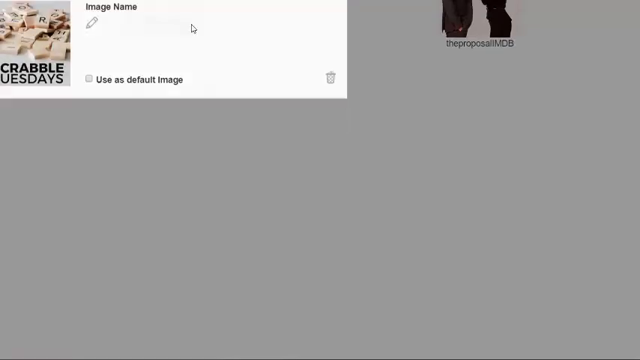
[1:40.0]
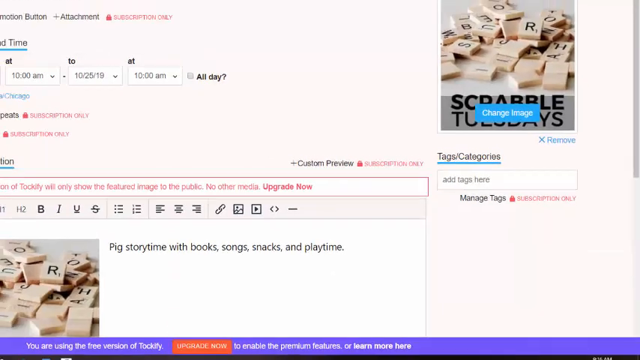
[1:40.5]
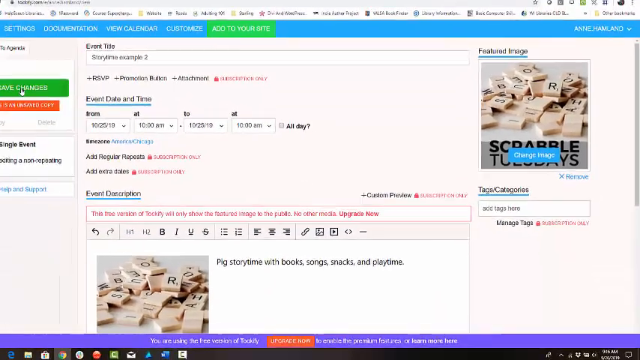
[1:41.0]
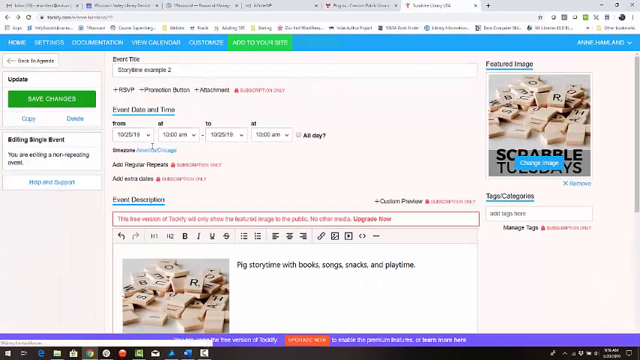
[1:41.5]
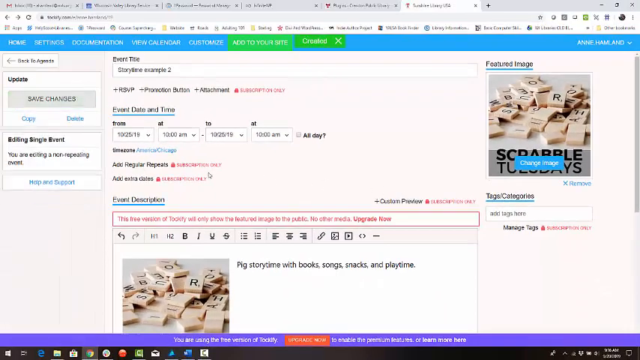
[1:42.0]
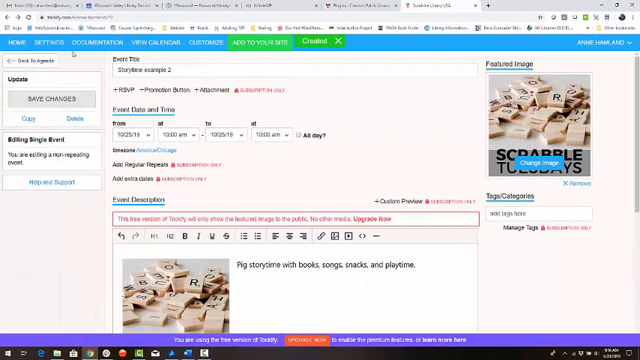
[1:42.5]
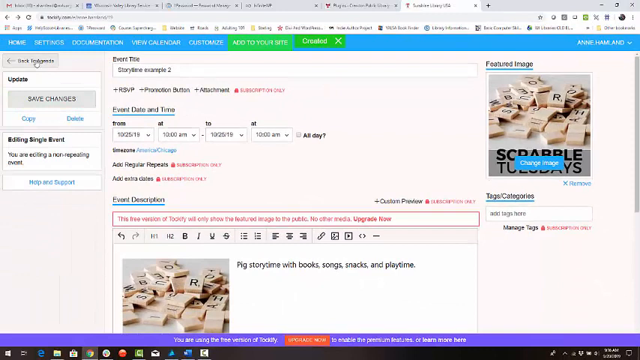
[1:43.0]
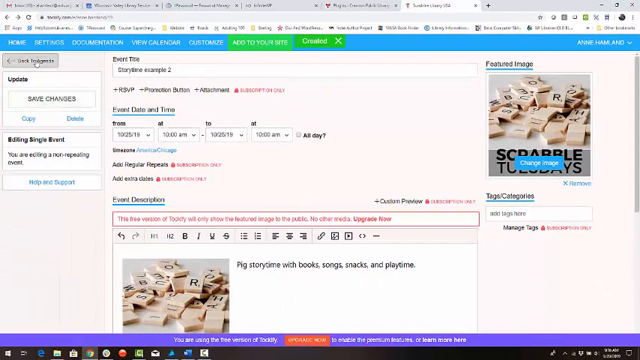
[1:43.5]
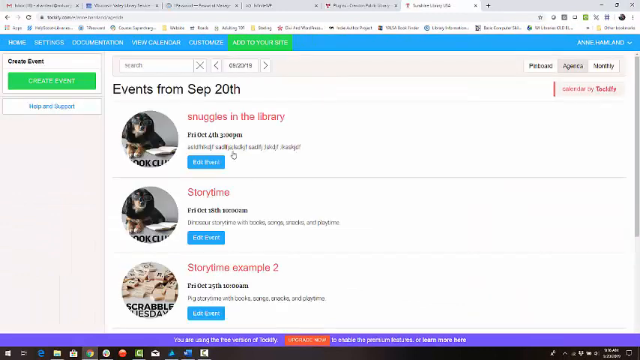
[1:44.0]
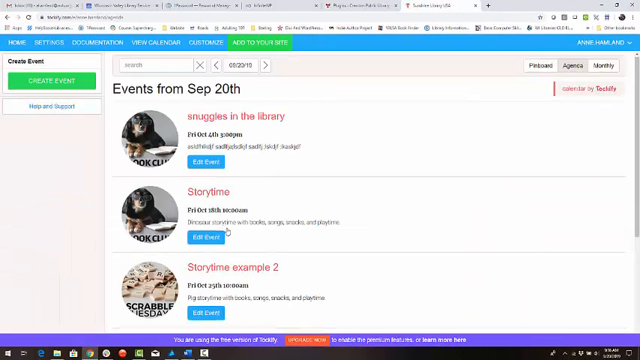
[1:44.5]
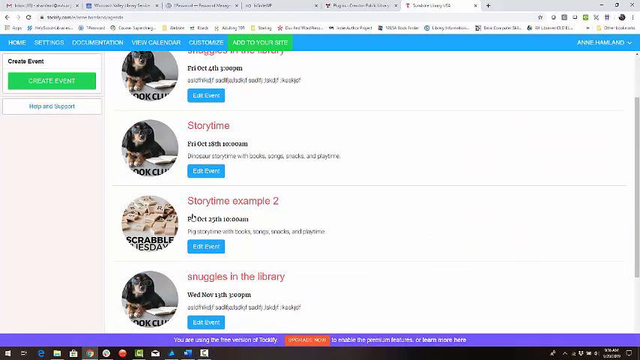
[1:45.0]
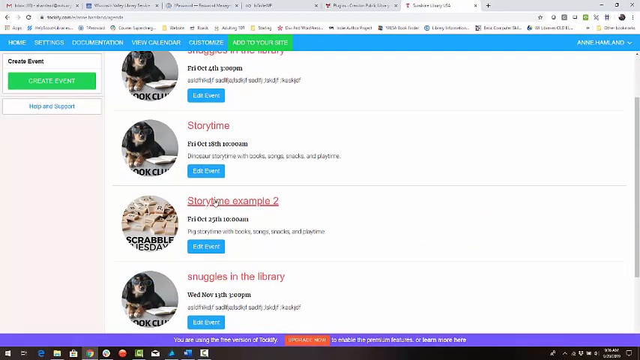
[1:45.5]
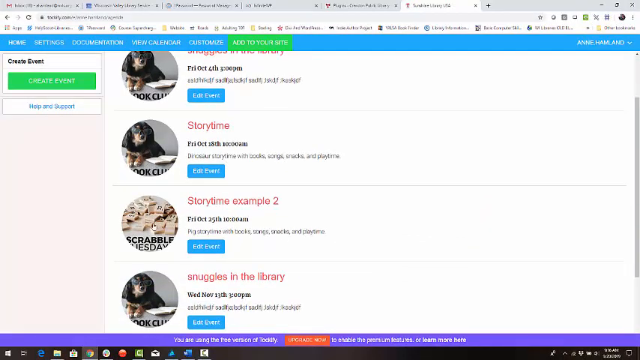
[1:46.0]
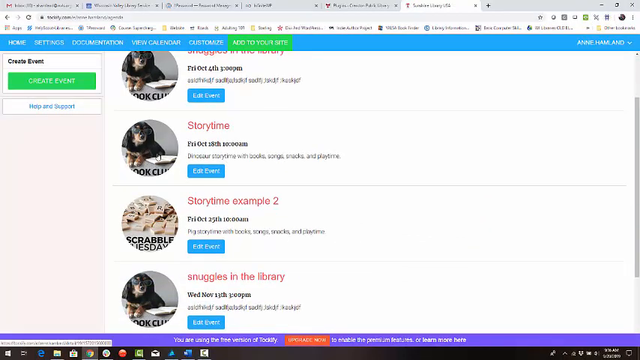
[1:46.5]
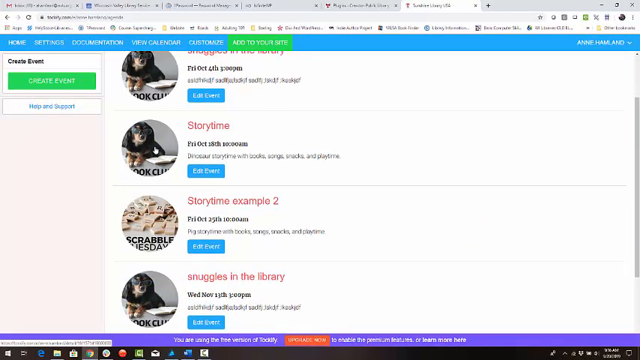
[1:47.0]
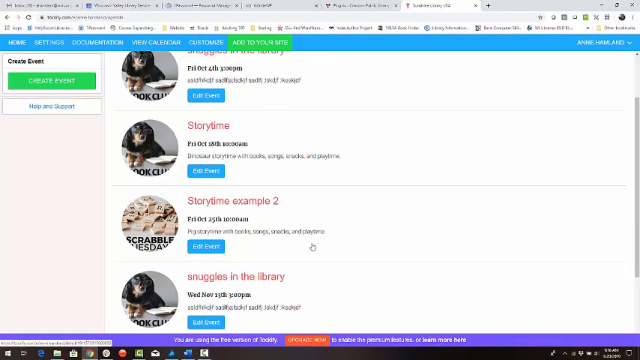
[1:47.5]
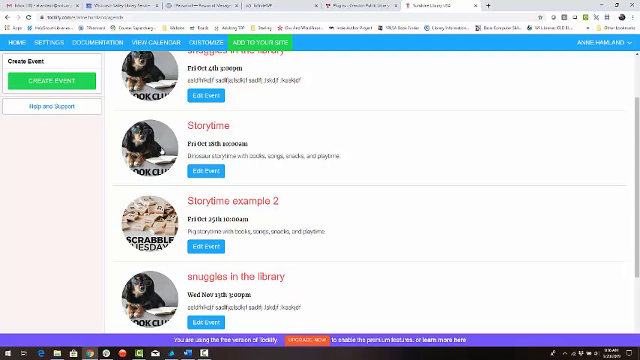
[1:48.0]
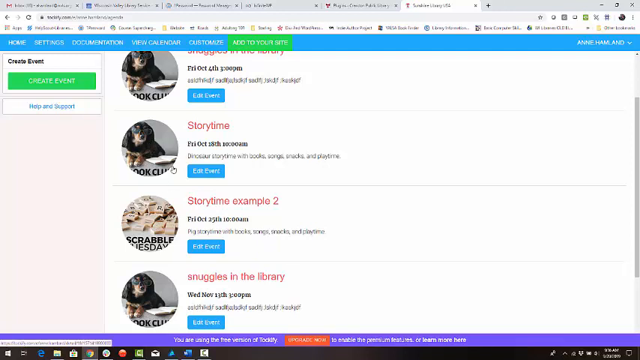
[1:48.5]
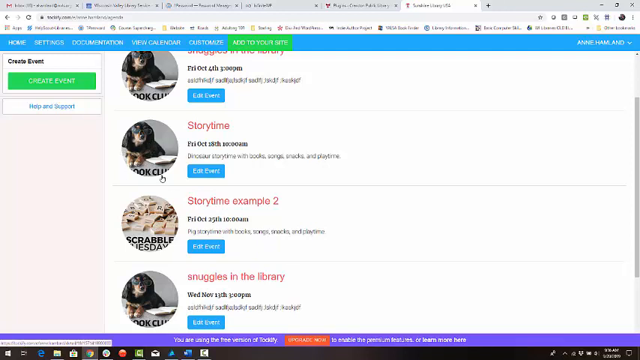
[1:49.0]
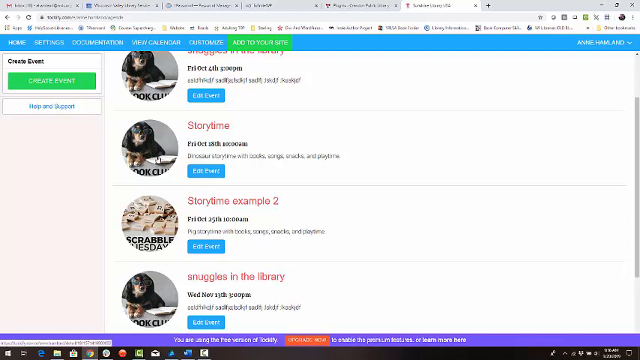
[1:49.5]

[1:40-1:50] The person appears to click a red button on the top left side of the website. Afterward, a taskbar at the top is partly highlighted in green, with the rest of it in blue. The person seems to click a gray button on the top left reading "back," which leads to a page reading "events from September 20th." It shows what look like profile pictures, two of which are the same picture: a dog with a black coat with blue trim. To the right are blue buttons, with red text above them and a description in black text. The person scrolls down to one of the options and eventually hovers the cursor over the profile picture with the dog, circling around it.